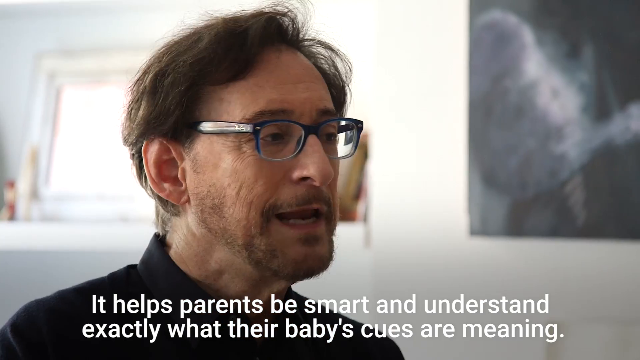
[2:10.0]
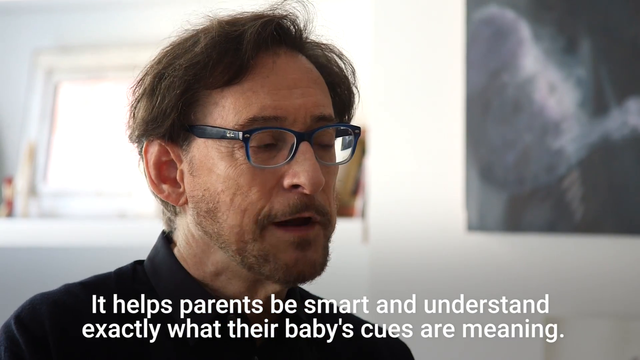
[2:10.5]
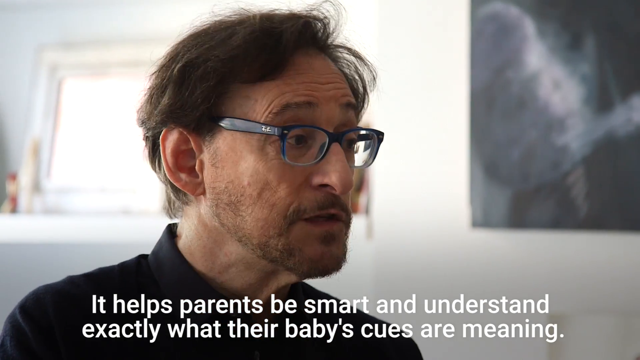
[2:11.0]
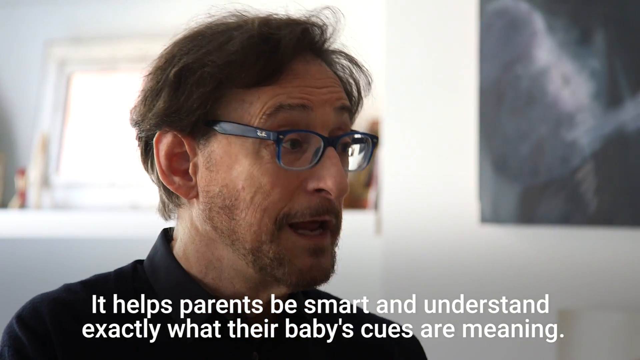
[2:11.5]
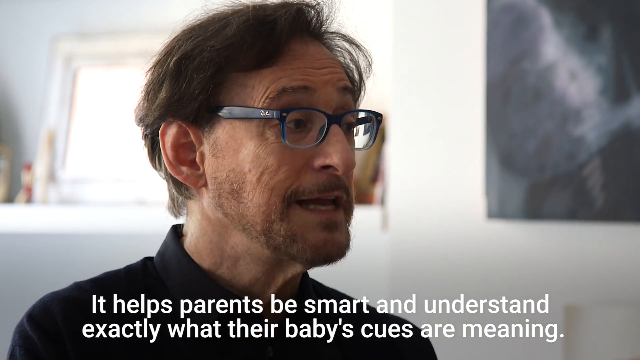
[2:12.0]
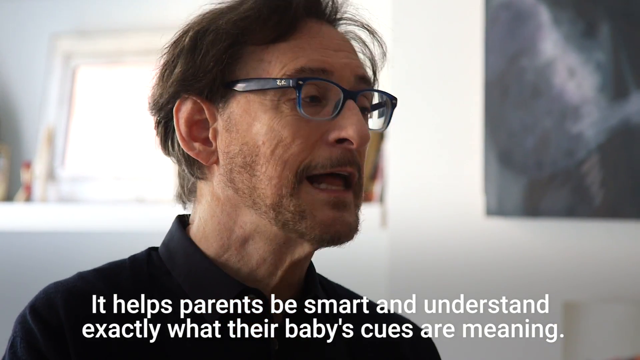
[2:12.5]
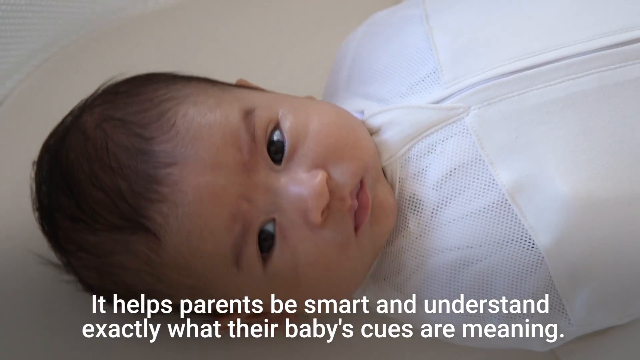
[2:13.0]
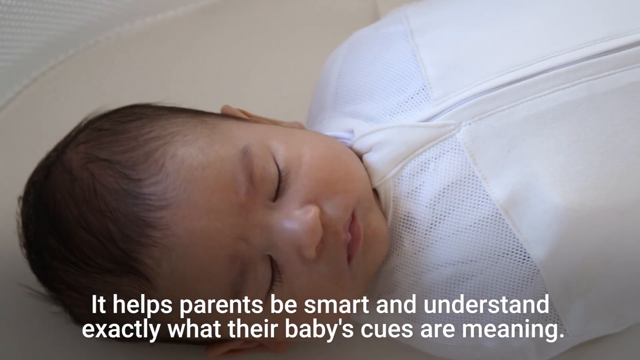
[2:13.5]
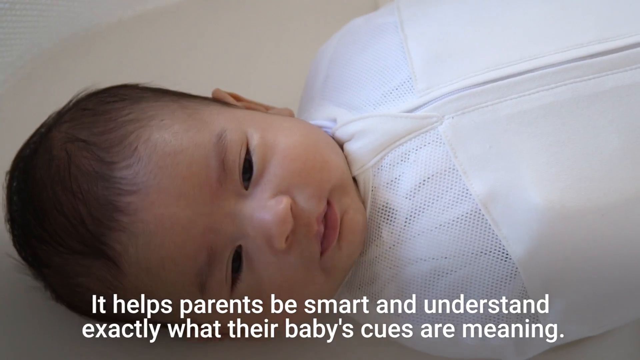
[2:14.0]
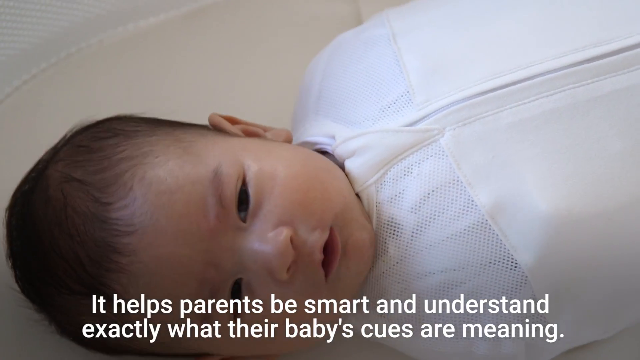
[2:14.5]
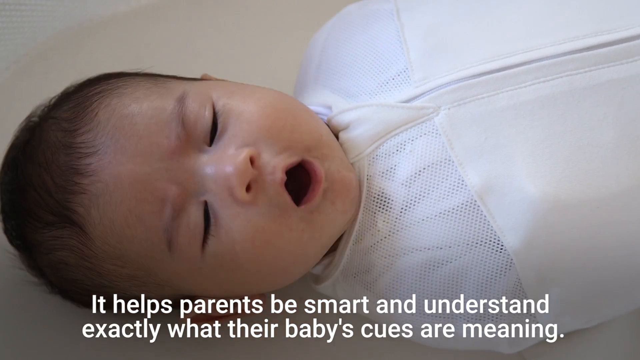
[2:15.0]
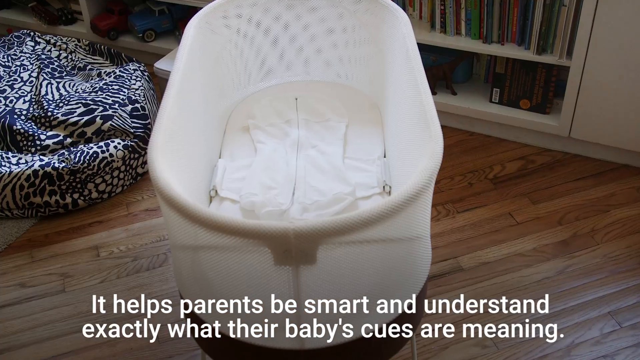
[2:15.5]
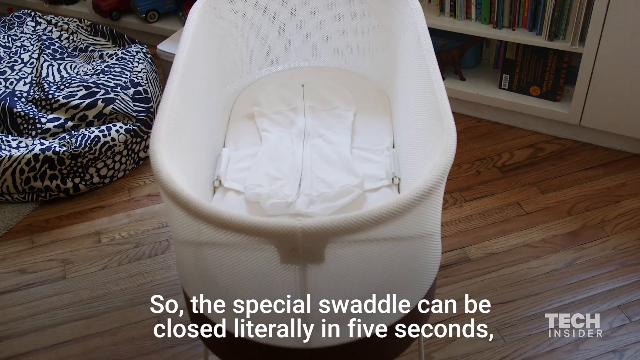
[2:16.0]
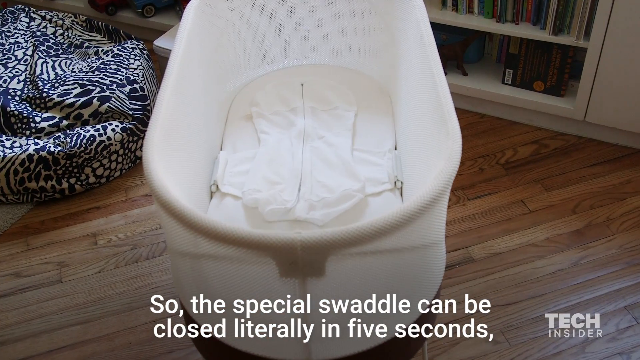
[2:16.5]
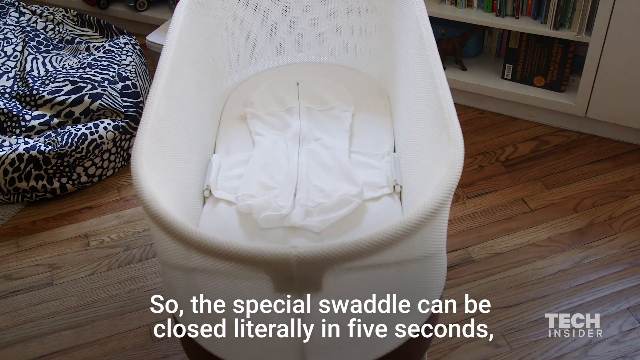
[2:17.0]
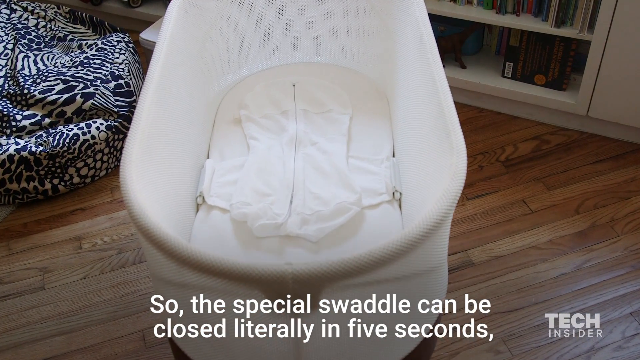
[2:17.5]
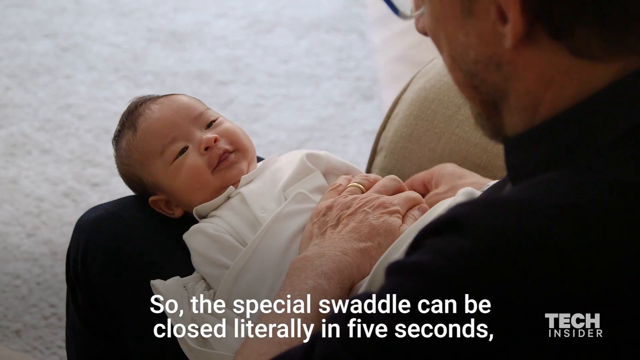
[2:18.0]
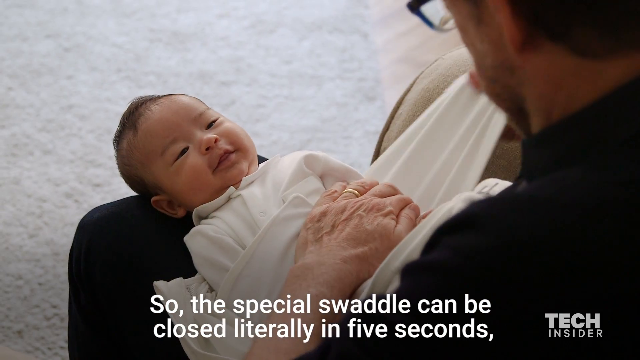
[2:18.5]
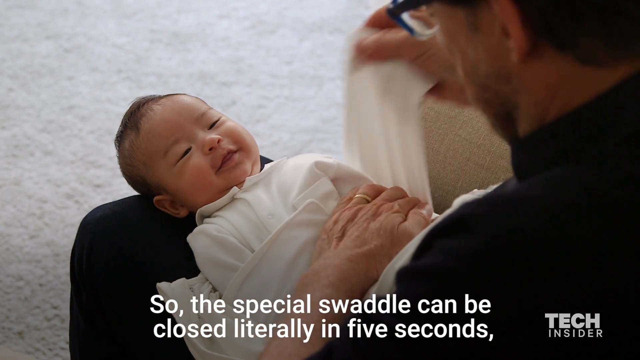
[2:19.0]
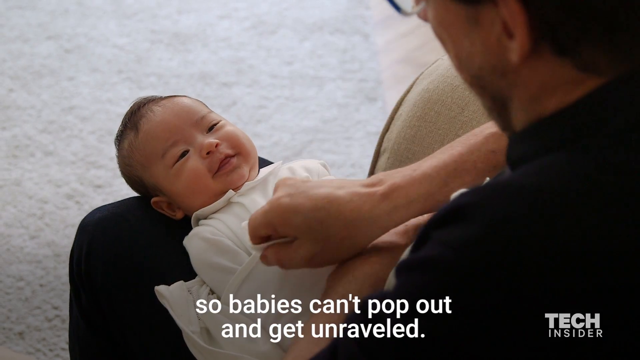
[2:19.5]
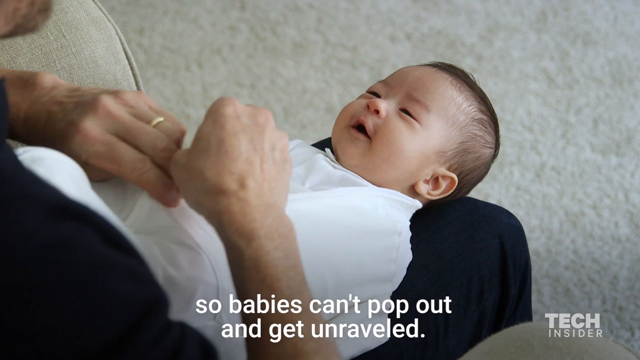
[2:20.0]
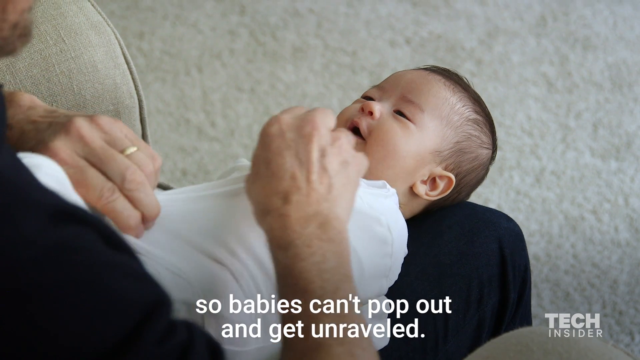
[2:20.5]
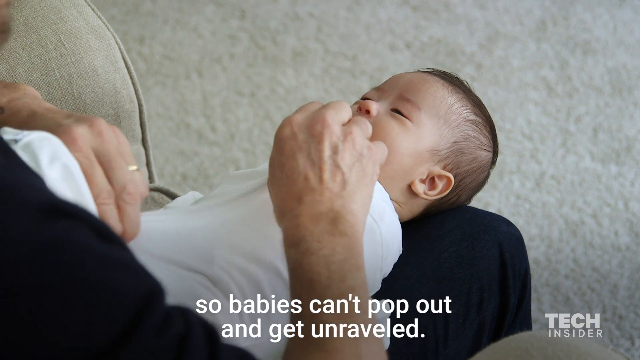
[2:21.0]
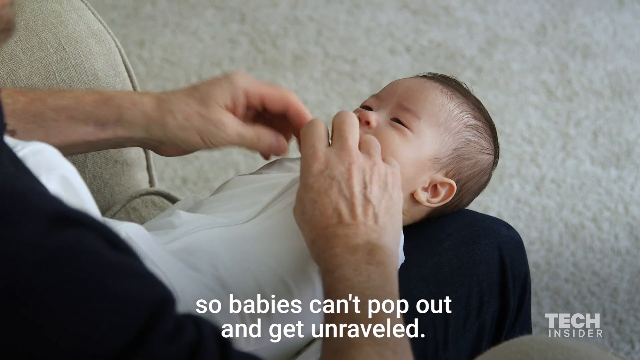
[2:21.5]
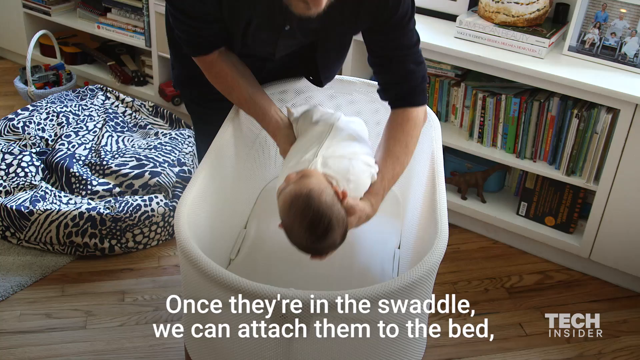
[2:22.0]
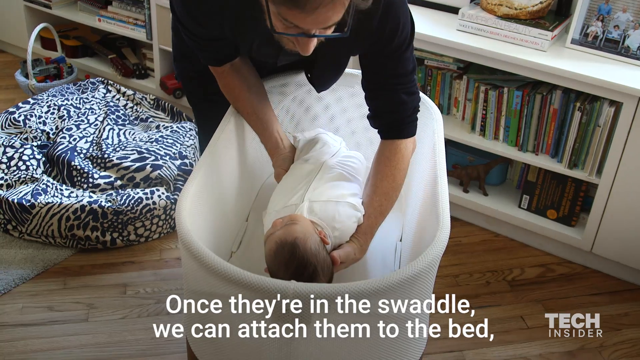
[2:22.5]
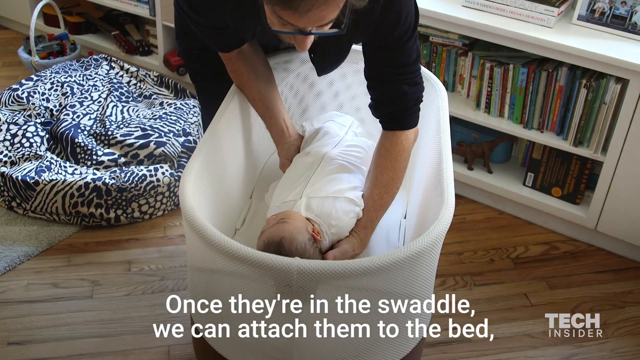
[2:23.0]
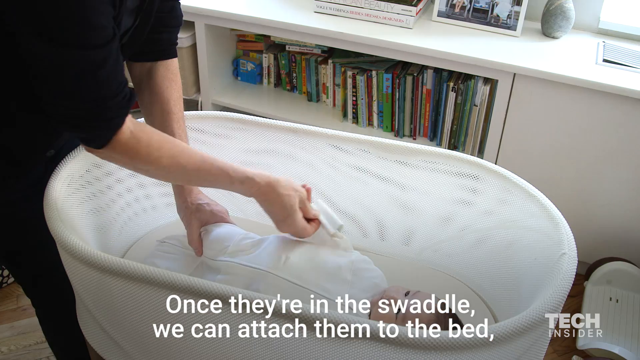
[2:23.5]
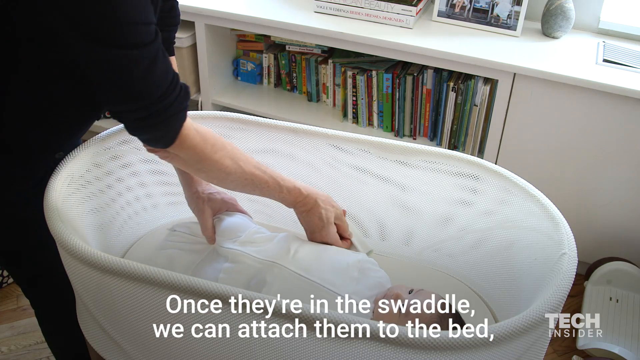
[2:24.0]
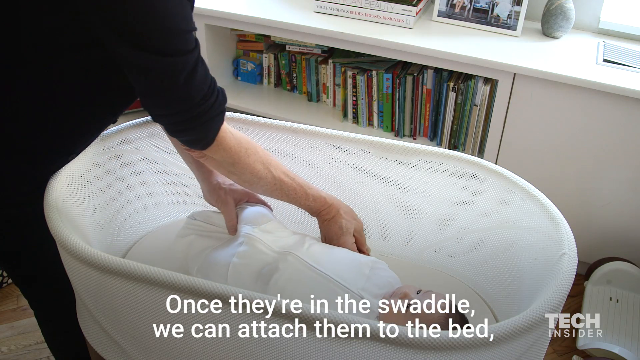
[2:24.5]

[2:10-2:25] A baby rocks back and forth in a crib. The baby, who appears to be of Asian descent, looks very happy and looks at the man placing him inside the crib. The man is of Caucasian descent and wears glasses bearing the Ray-Ban logo. Once placed in the rocking crib, the baby seems very relaxed and appears very happy looking at the man. The camera pans to various angles of the crib and shows an up-close shot of the baby. There is a wooden ground at the bottom.